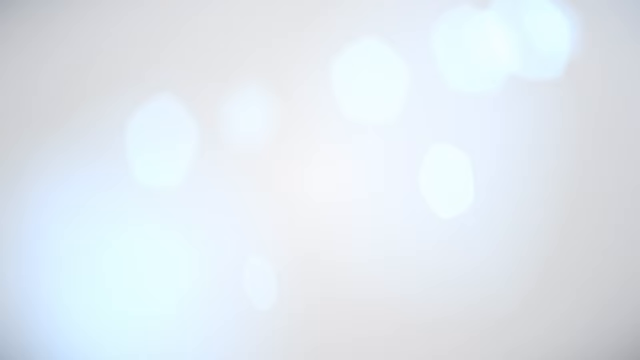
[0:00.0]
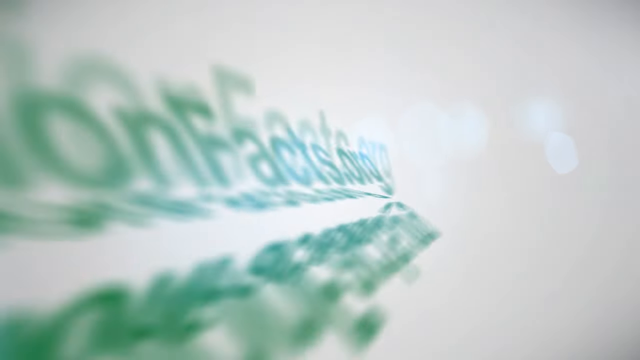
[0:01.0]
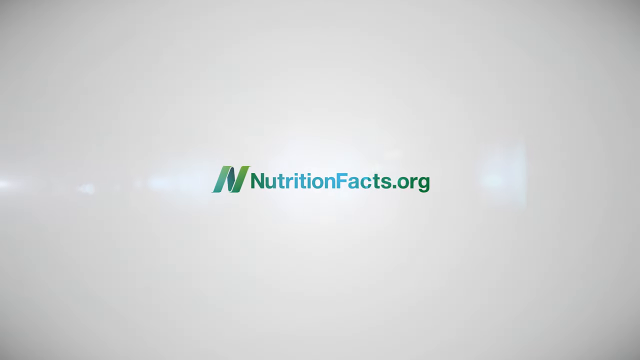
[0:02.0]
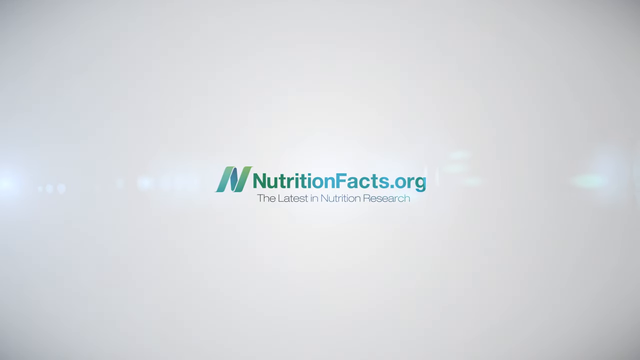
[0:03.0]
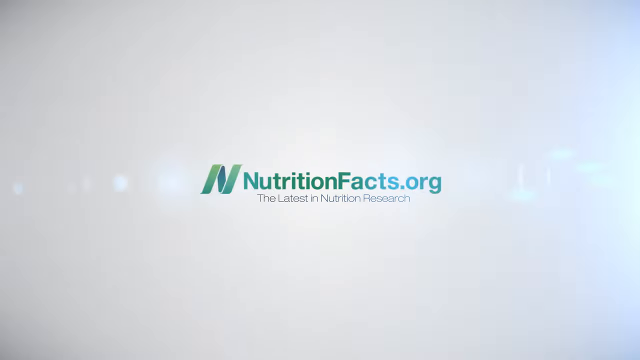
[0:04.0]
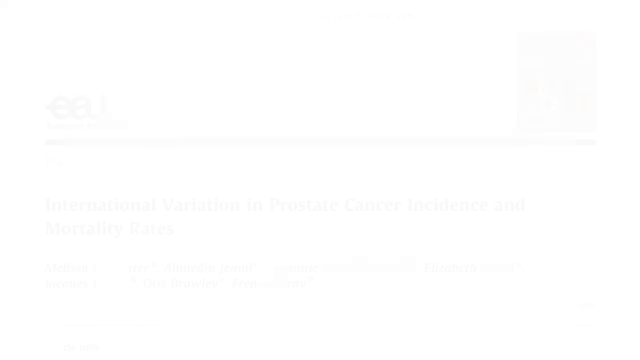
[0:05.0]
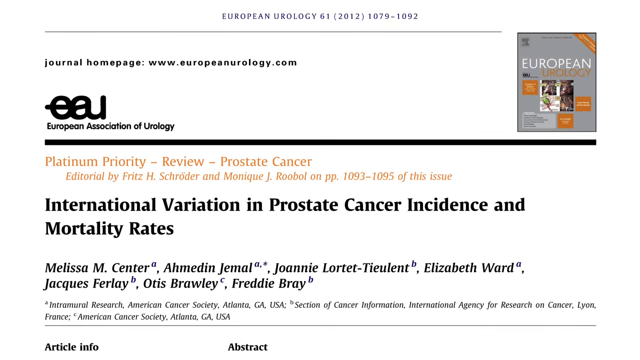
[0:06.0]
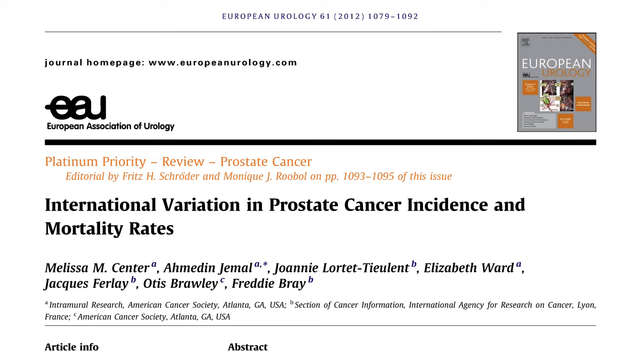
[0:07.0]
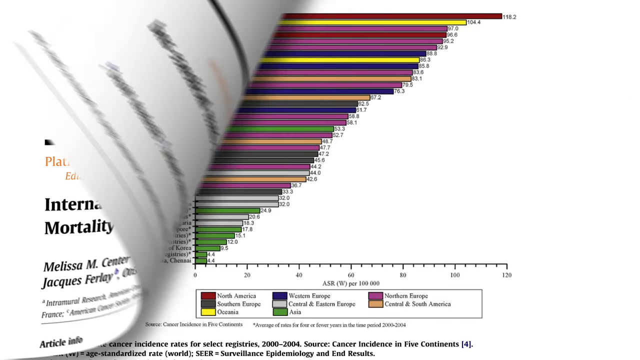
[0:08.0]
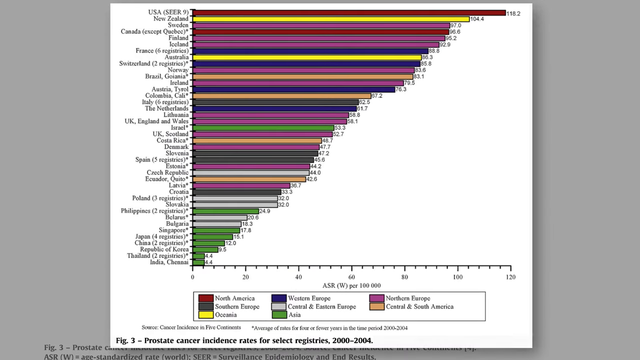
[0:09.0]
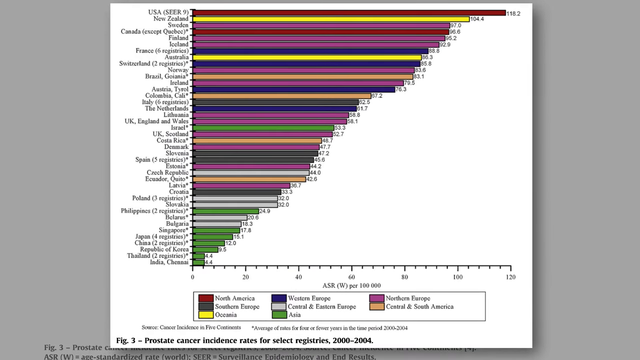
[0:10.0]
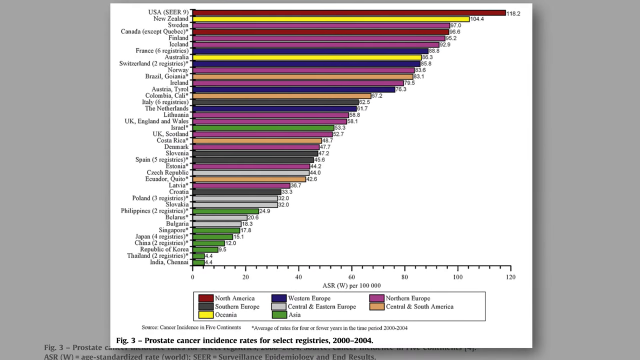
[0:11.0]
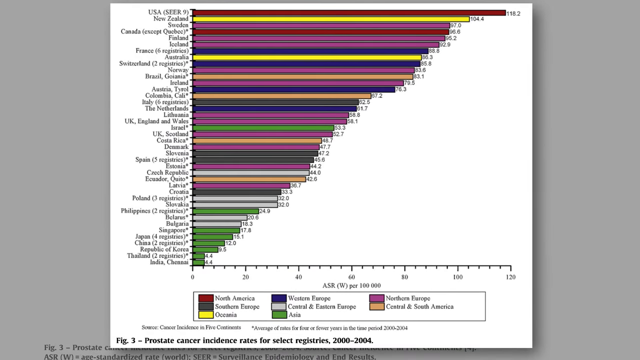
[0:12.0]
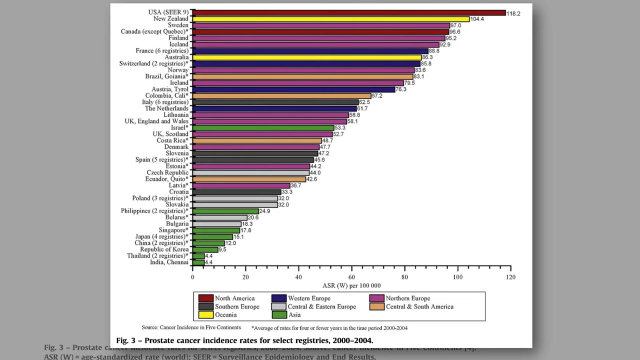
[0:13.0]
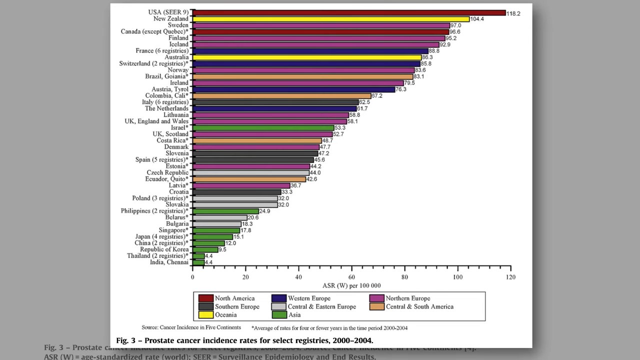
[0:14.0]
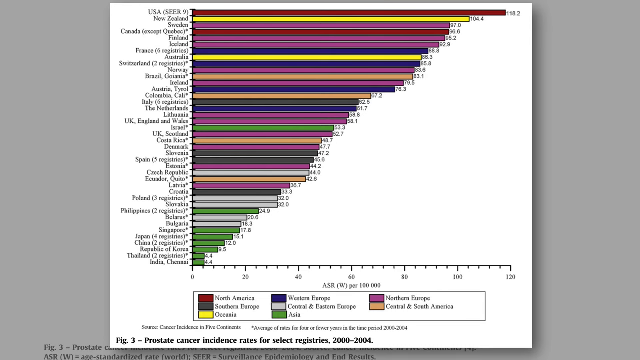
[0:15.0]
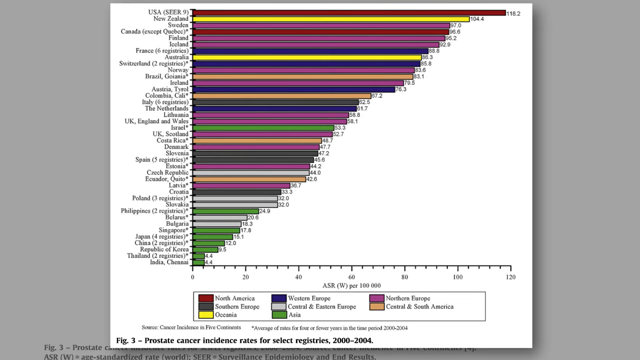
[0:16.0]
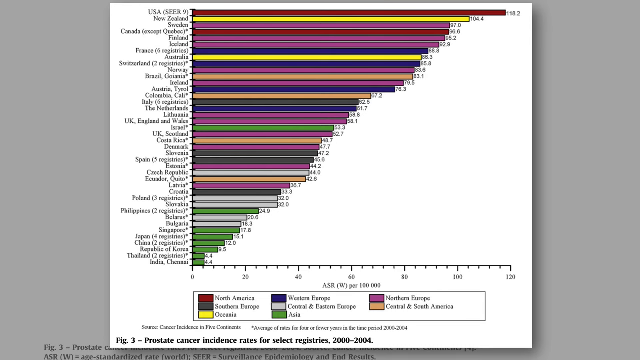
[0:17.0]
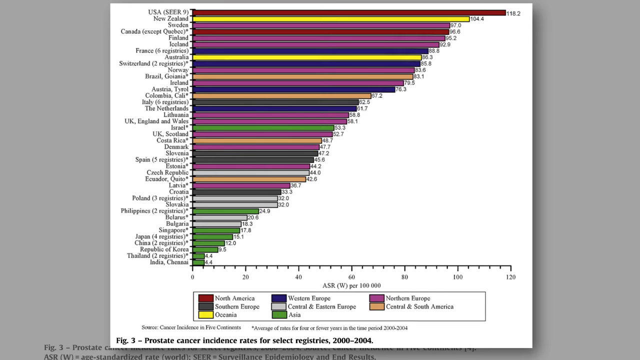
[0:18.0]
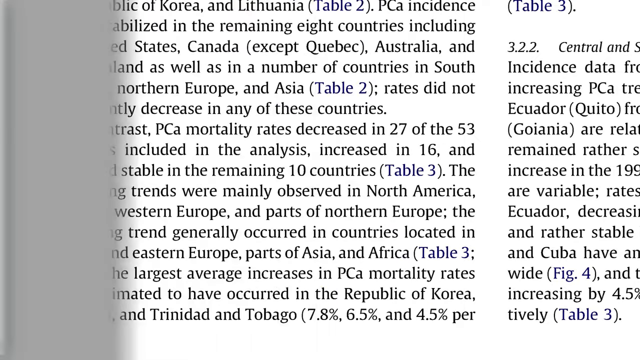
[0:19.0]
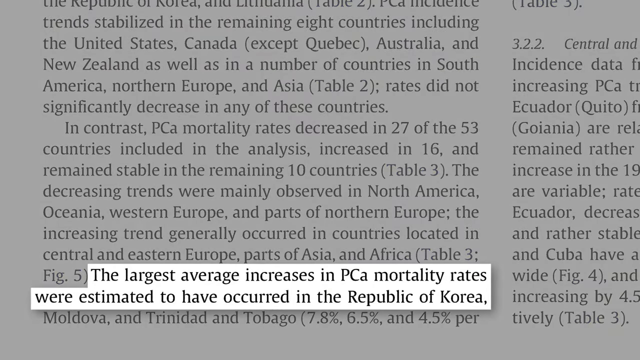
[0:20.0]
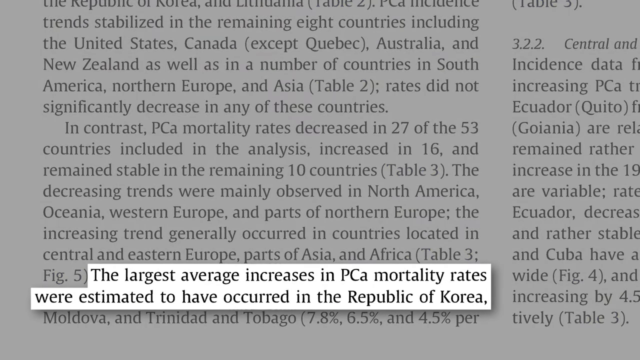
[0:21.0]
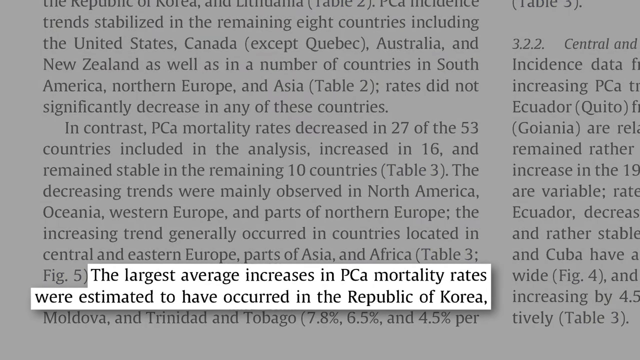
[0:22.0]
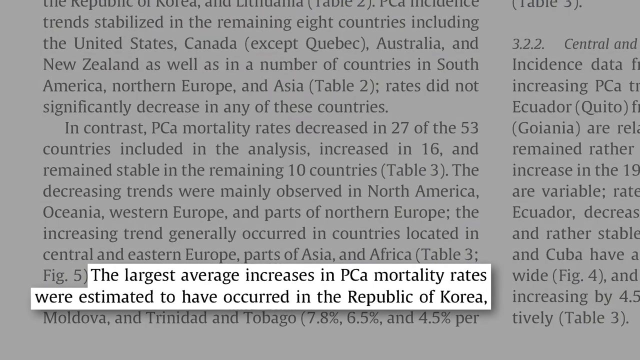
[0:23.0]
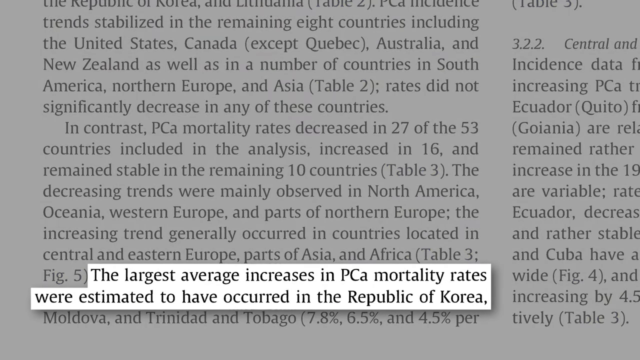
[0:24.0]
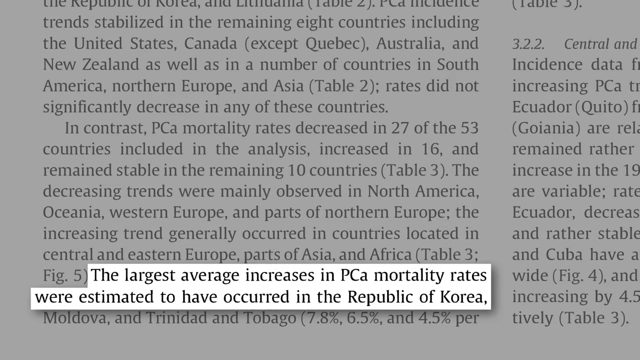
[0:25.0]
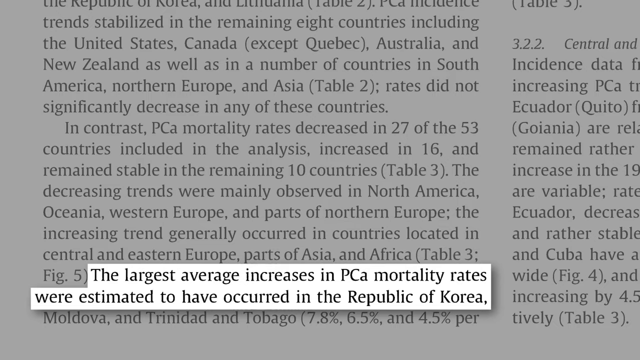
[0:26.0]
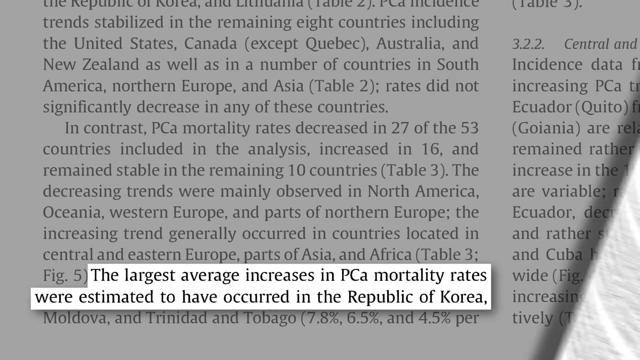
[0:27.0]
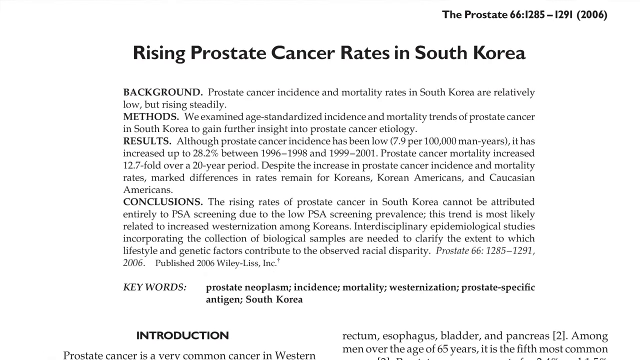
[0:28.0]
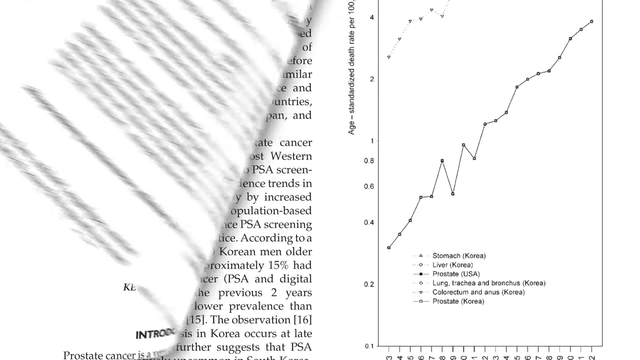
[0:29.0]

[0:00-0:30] The video opens with nutritionfacts.org and "the latest in nutrition research", then pans to a research document from the journal European Urology, labeled "European Urology 61" and "2012". A URL, europeanurology.com, is shown along with the journal's logo, "EU". The paper is titled "International variation in prostate cancer incidence and mortality rates", and the authors' names are listed. The next page is a bar chart with countries on the Y-axis. From the top, the USA has the longest bar at 118.2, followed by New Zealand at 104.4 and Sweden at what looks like 97. The bar graph is apparently related to prostate cancer. A legend at the bottom of the graph uses different colors: red for North America, gray for Southern Europe, yellow for Oceania, blue for Western Europe, gray for Central and Eastern Europe, green for Asia, purple for Northern Europe and beige for Central and South America. The page then changes to one with many paragraphs of text, including "In contrast PCA mortality rates decreased by 27 of the 53 countries included in the analysis, increased in 16 and remain stable in the remaining 10 countries." A highlighted part pops out of the page, reading "The largest average increases in PCA mortality rates were estimated to have occurred in the Republic of Korea." The page then changes to another paper, titled "Rising prostate cancer rates in South Korea", published in 2006.